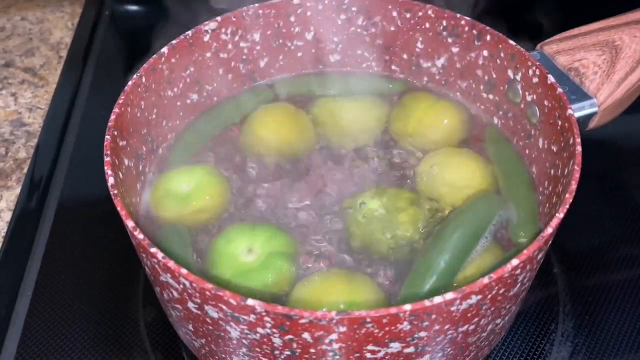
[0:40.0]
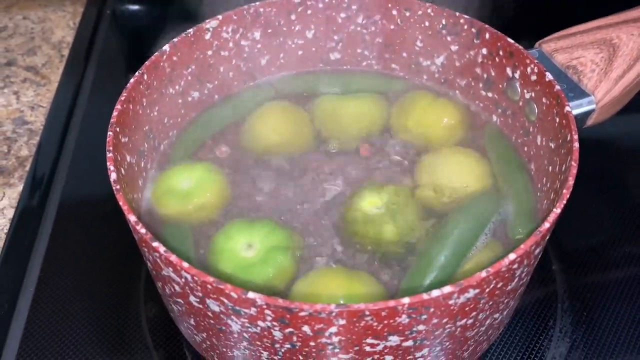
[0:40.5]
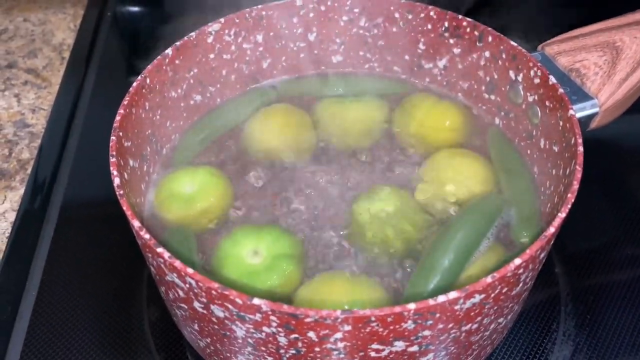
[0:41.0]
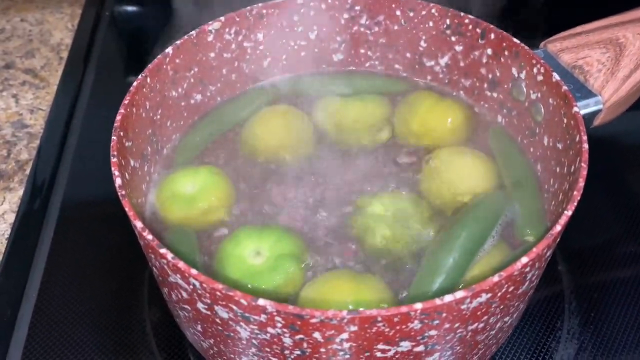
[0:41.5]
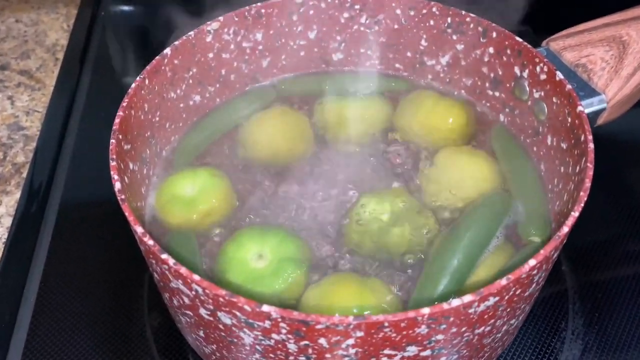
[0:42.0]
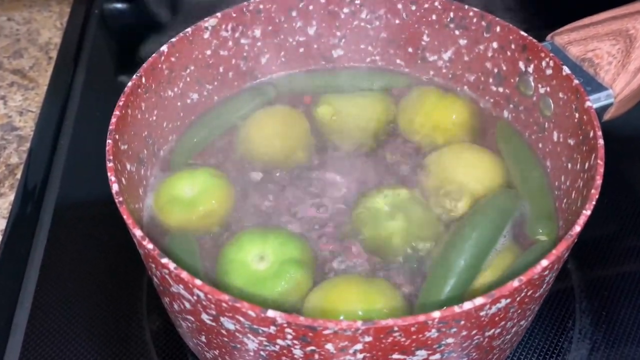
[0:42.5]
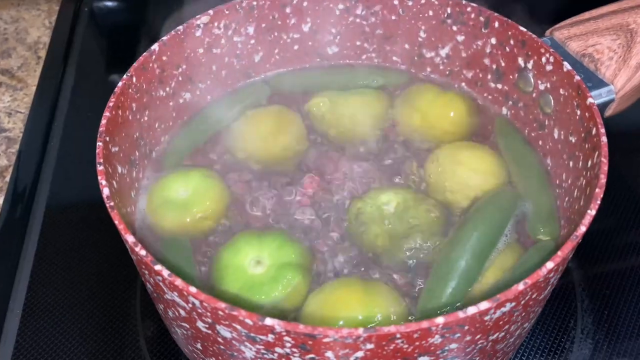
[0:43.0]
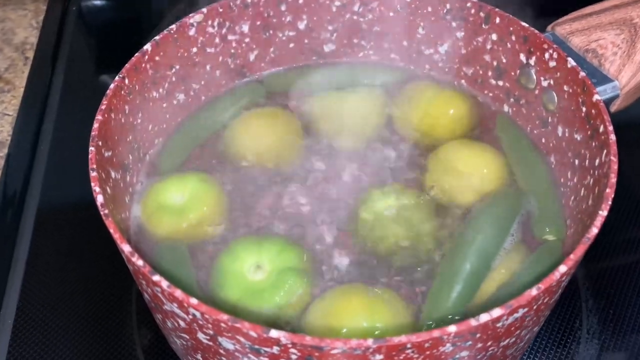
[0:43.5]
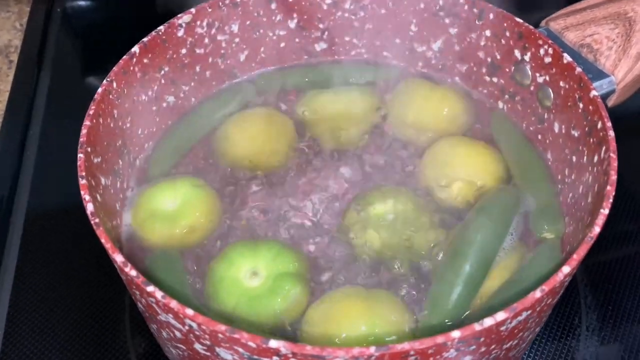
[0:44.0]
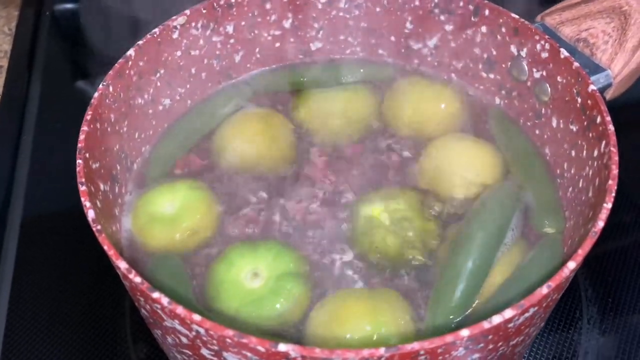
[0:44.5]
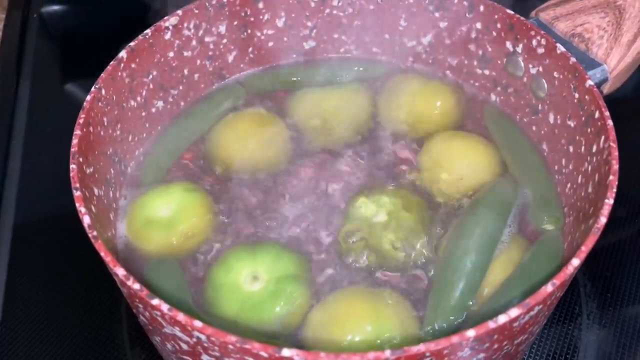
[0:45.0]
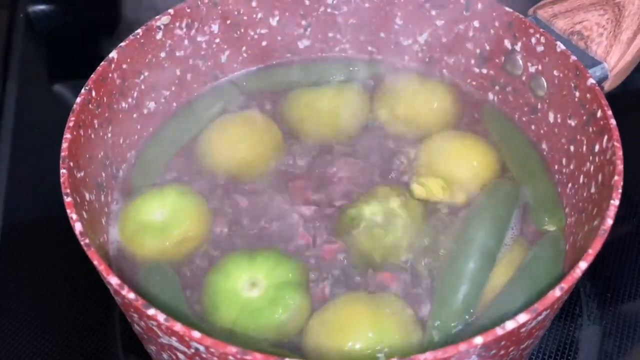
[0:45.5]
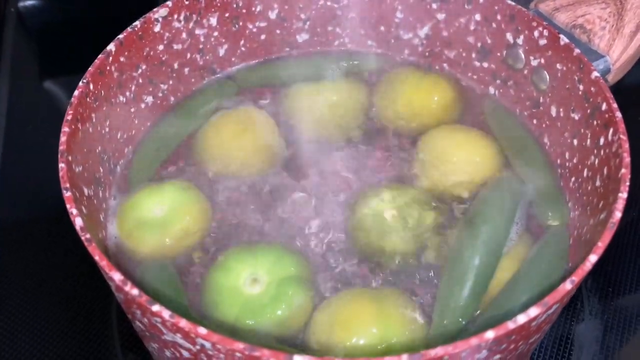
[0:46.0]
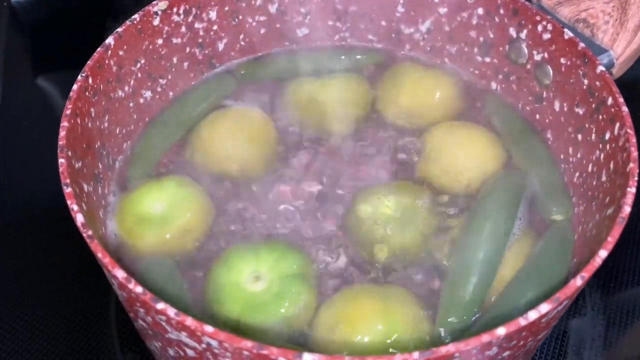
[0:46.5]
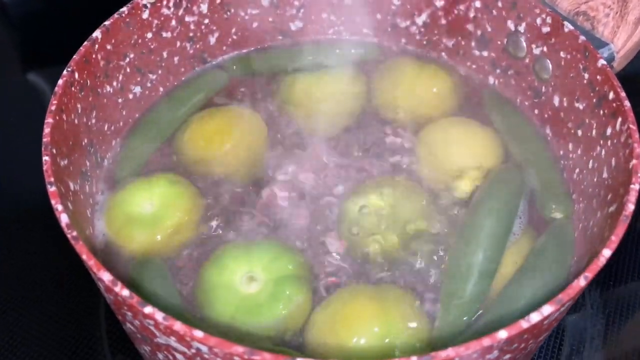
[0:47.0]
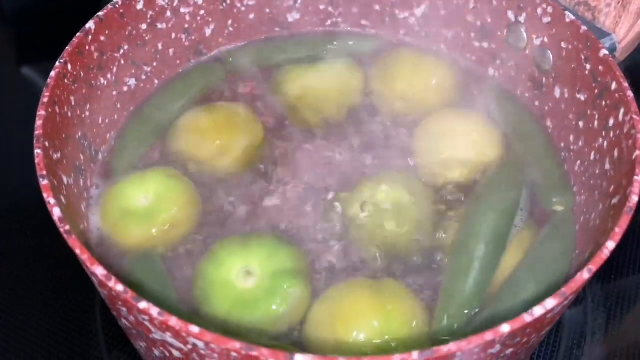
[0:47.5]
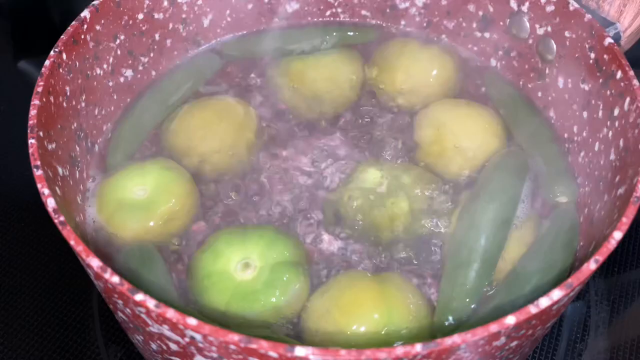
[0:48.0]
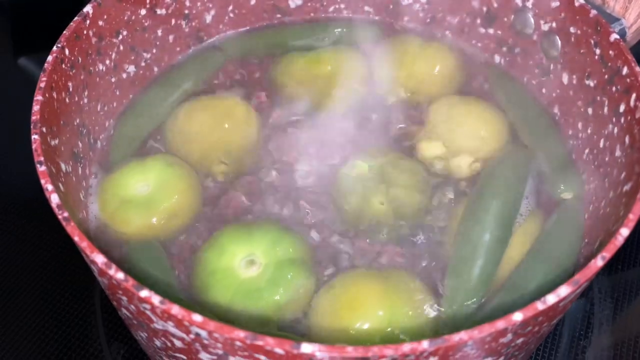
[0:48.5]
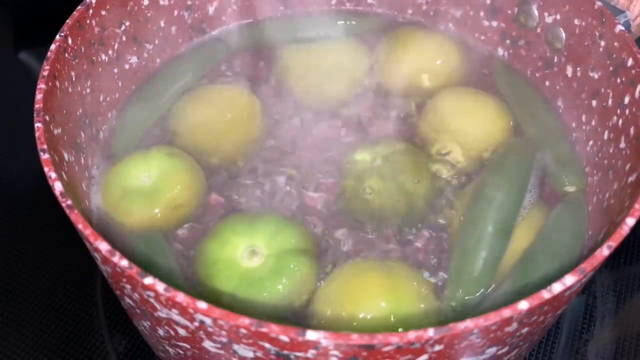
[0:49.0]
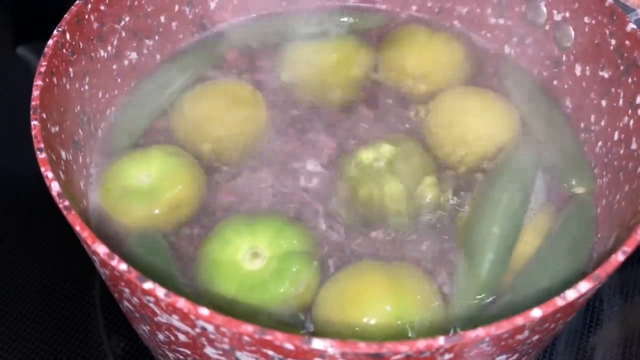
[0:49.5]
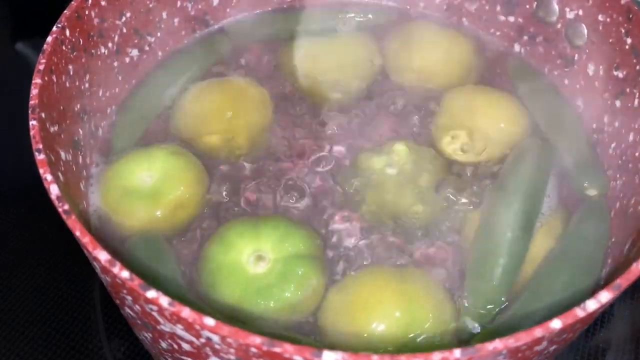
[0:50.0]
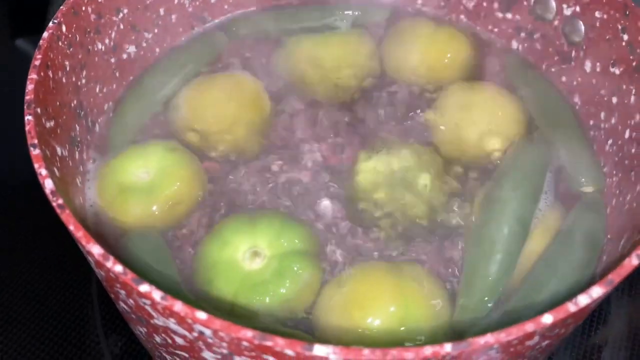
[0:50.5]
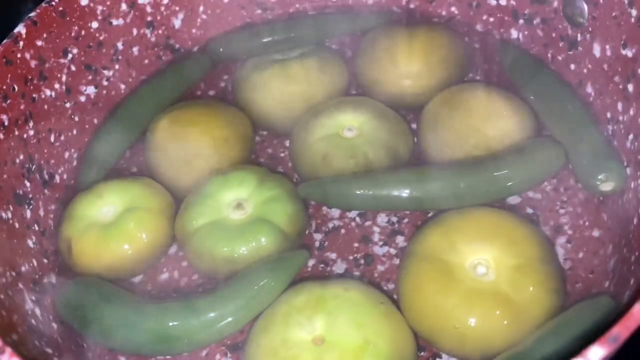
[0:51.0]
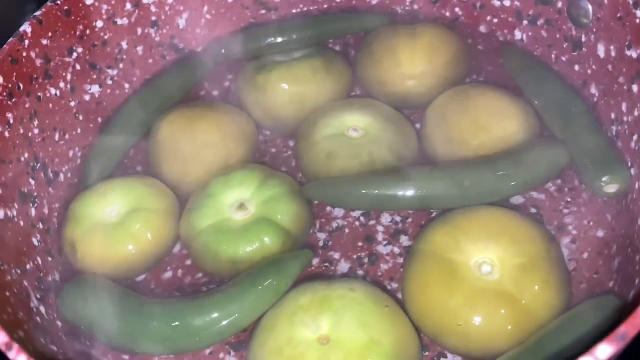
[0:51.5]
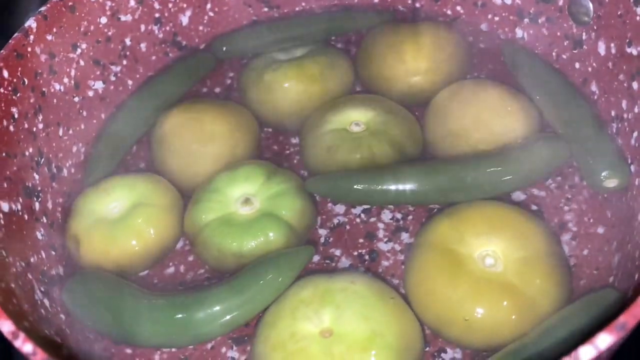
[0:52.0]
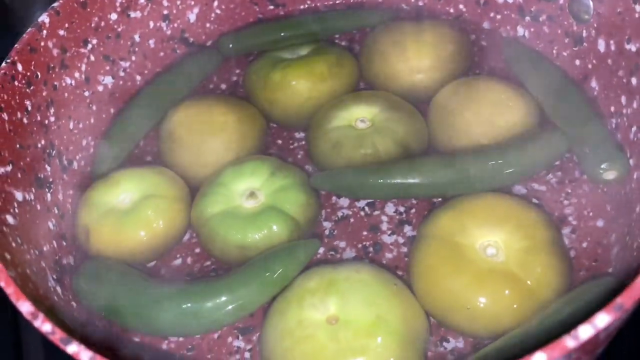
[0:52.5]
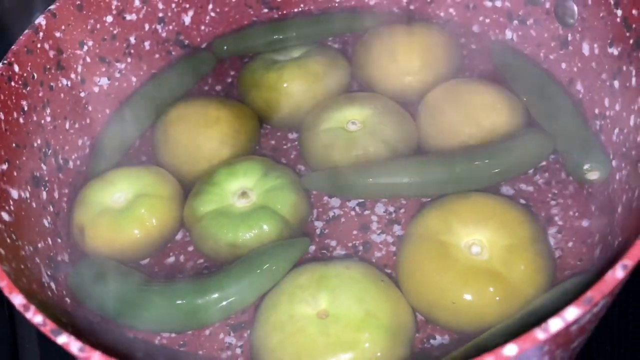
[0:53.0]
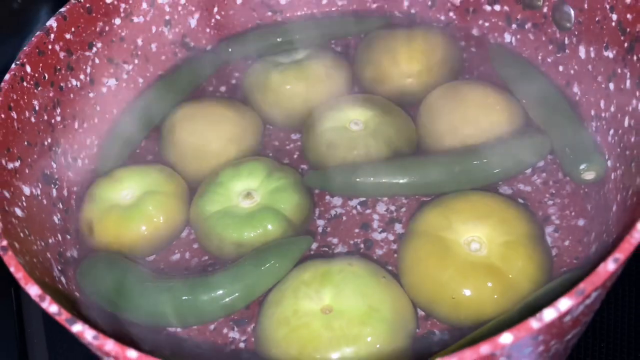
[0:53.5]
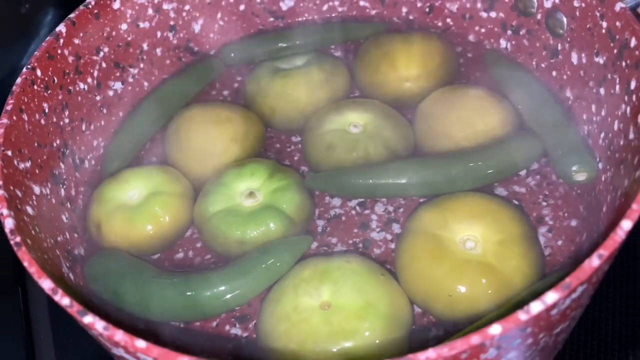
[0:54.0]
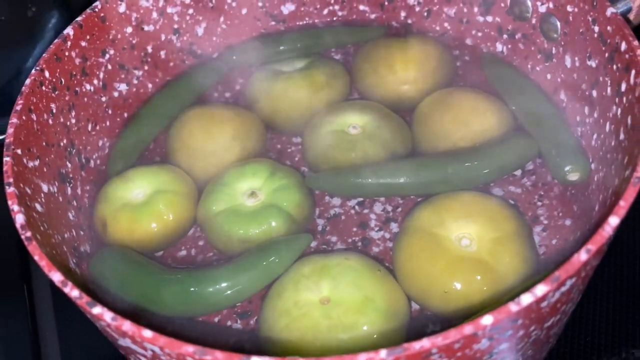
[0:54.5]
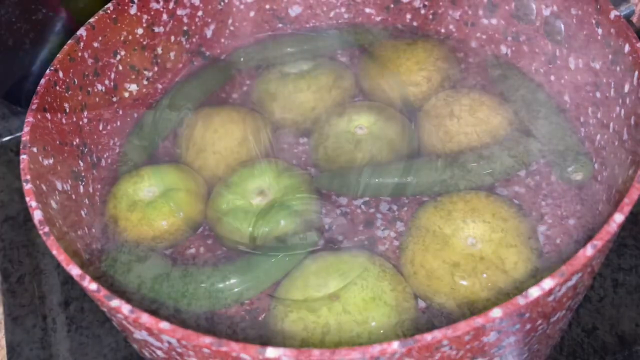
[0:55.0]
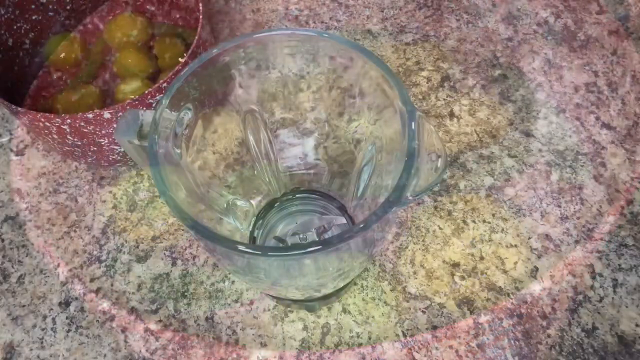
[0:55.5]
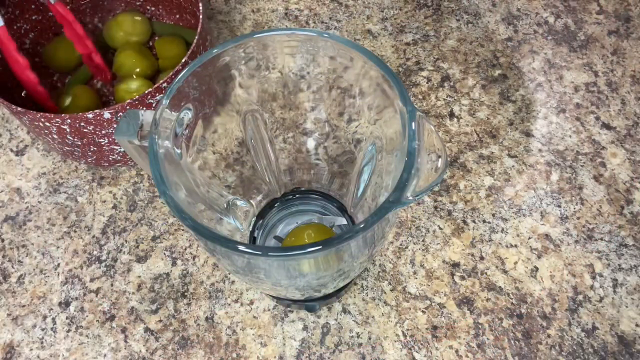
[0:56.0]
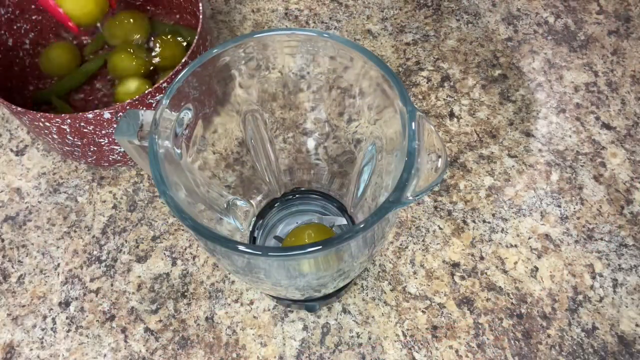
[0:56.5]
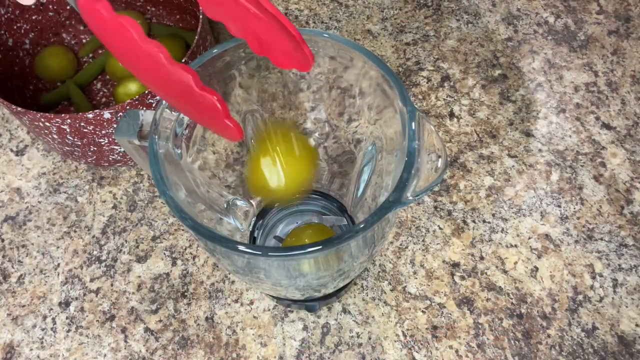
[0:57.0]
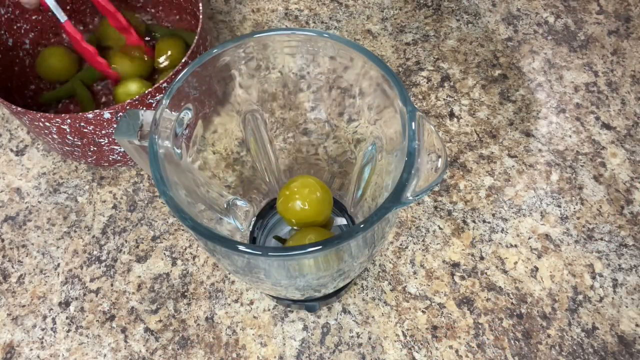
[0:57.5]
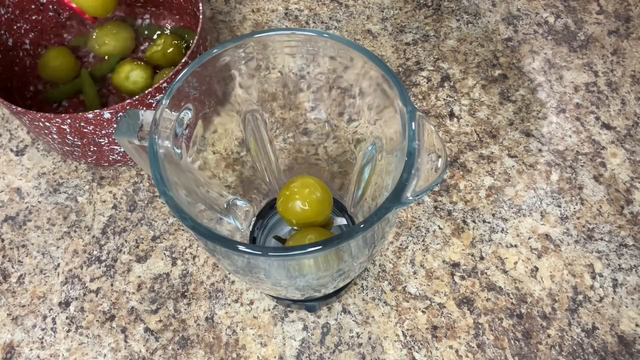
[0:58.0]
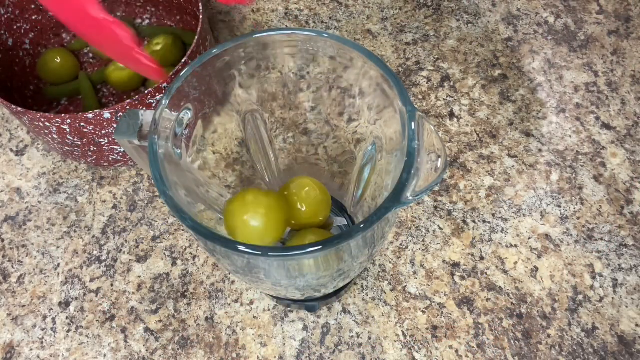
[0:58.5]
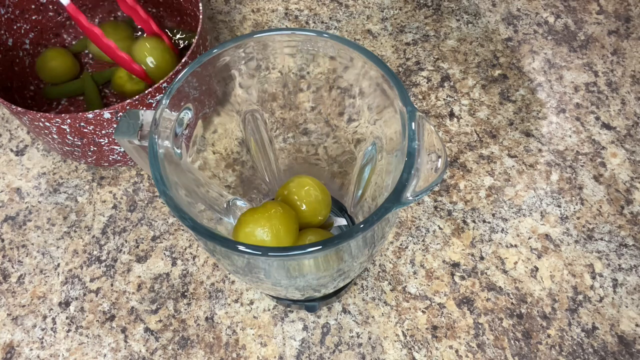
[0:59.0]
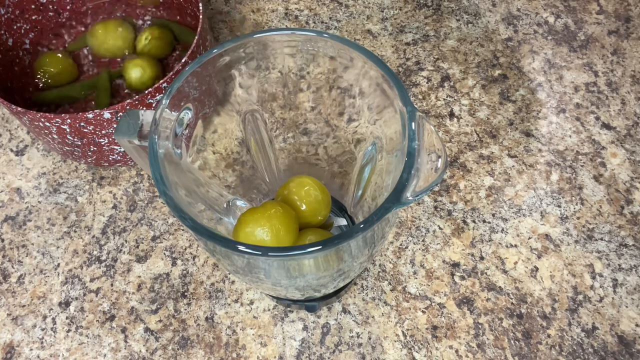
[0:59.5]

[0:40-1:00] A red pan contains yellow olives alongside green vegetables. The camera keeps its focus on the middle of the pan as the contents boil at a high temperature. The scene transitions to the same pan boiling, with the green vegetables now wrapped around the yellow foodstuffs, and steam rises as it boils. The scene then transitions to a ceramic tile counter with two cups: a glass plastic cup in the front and another cup in the top left that holds olives. The person on camera uses tongs to grab olives from the cup at the top left and drop them into the glass cup in a rapid motion.